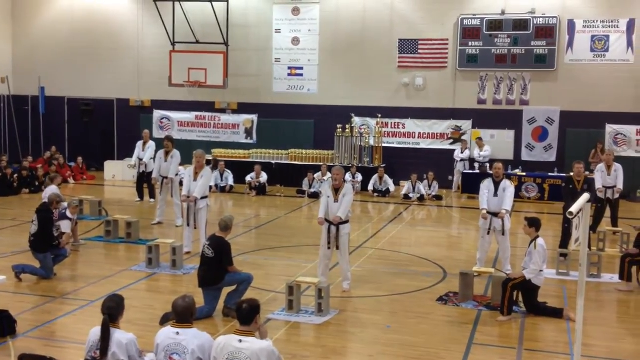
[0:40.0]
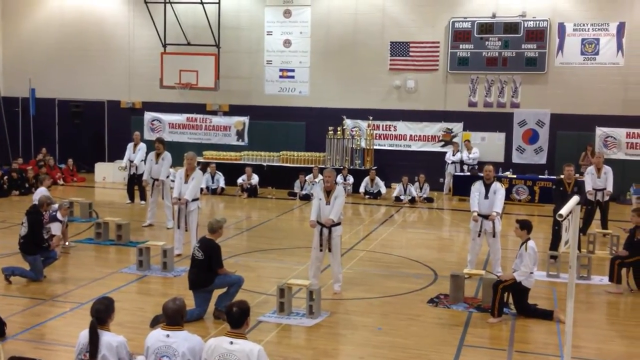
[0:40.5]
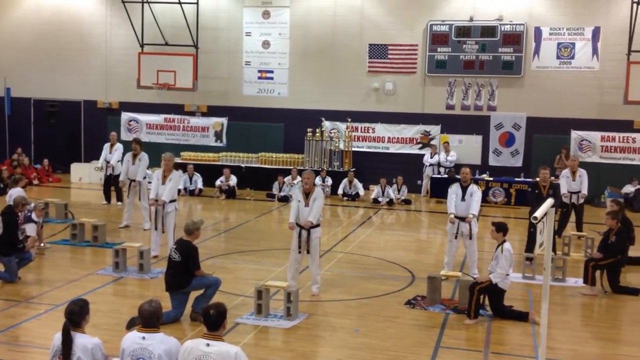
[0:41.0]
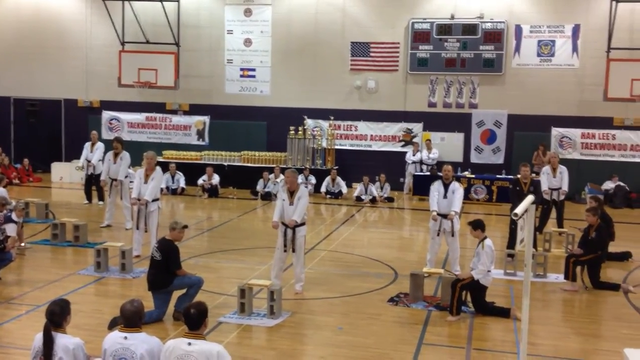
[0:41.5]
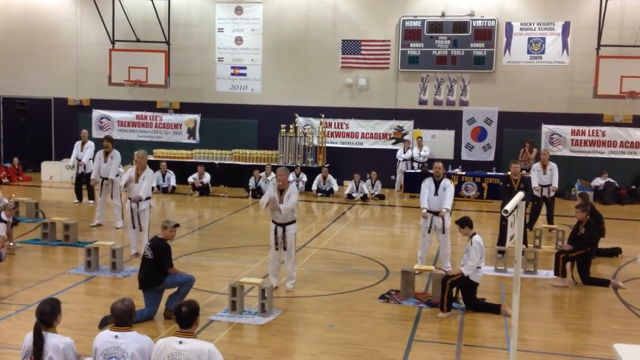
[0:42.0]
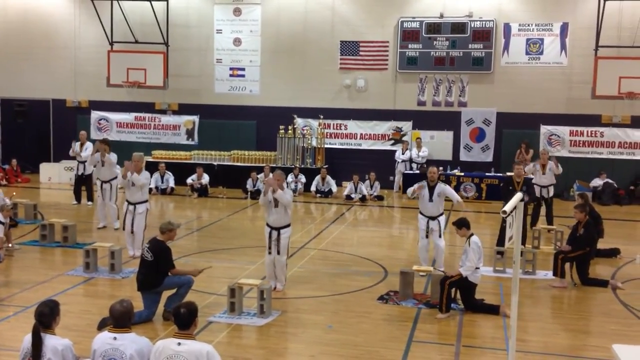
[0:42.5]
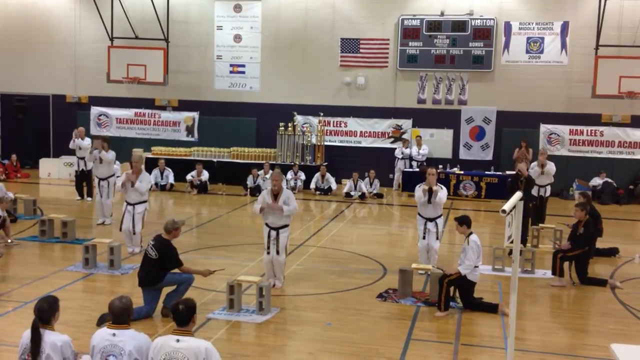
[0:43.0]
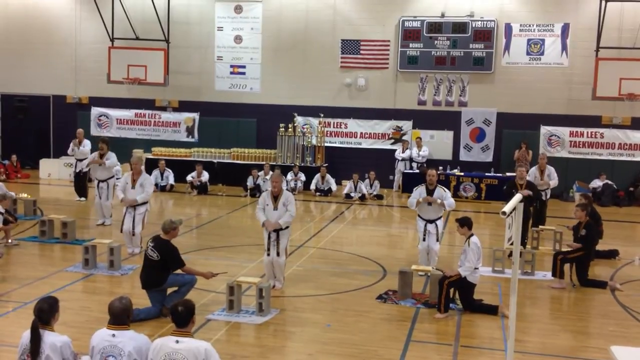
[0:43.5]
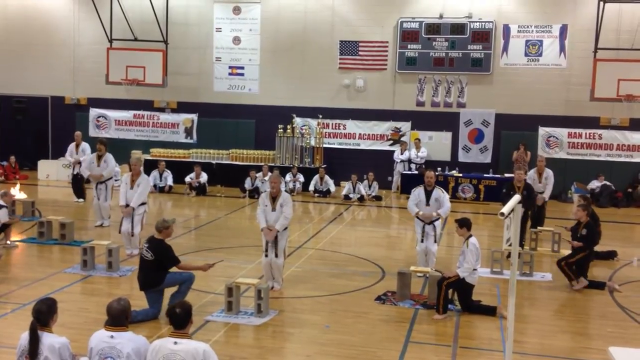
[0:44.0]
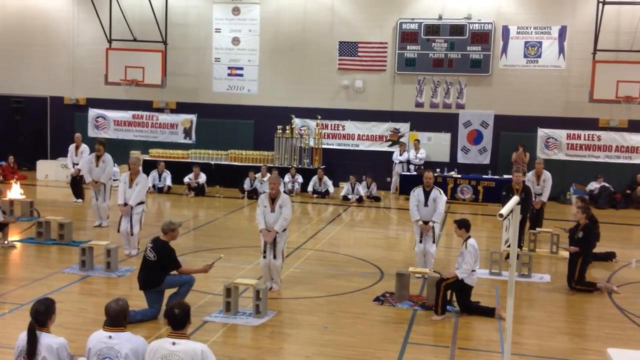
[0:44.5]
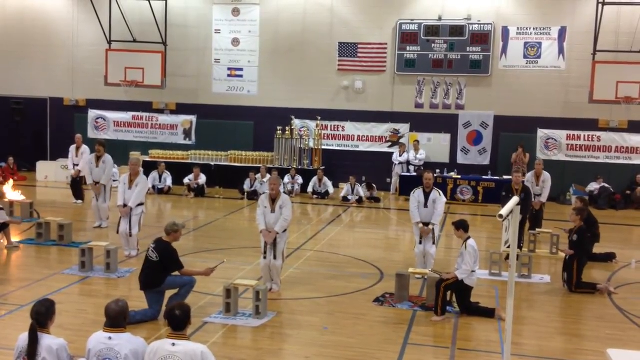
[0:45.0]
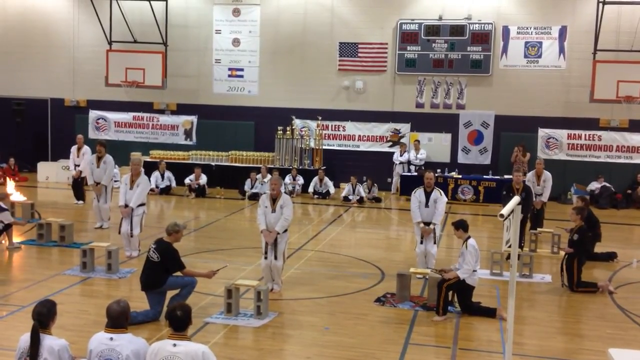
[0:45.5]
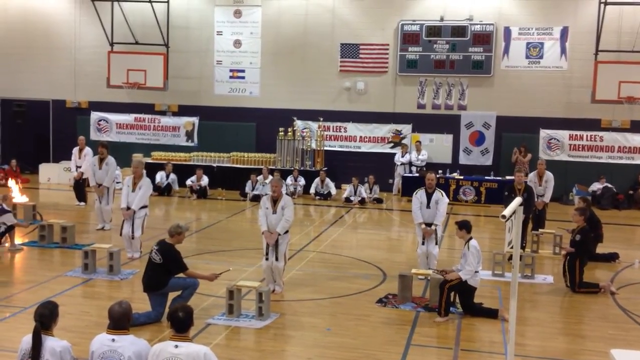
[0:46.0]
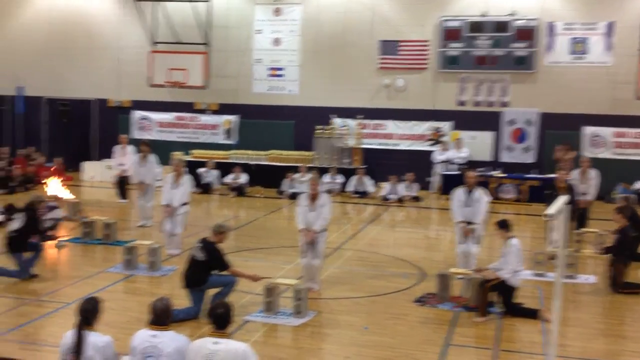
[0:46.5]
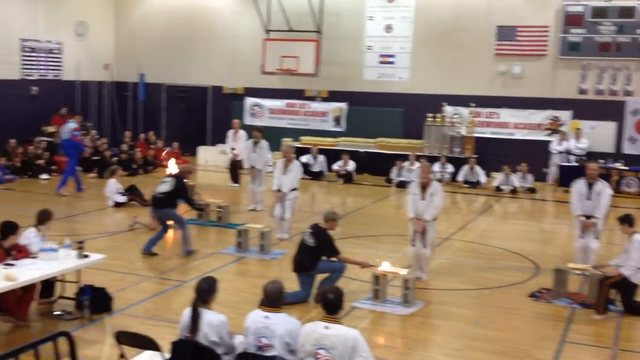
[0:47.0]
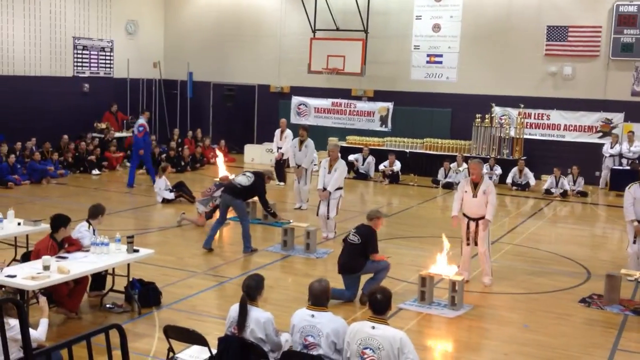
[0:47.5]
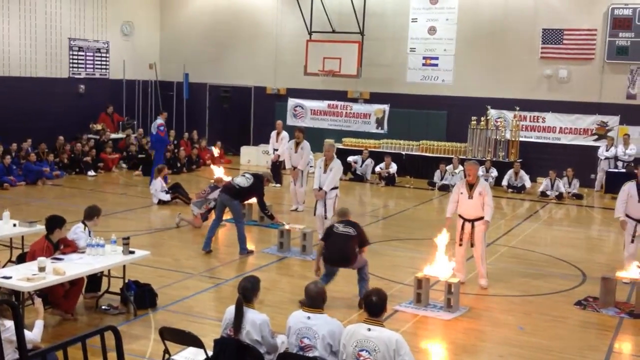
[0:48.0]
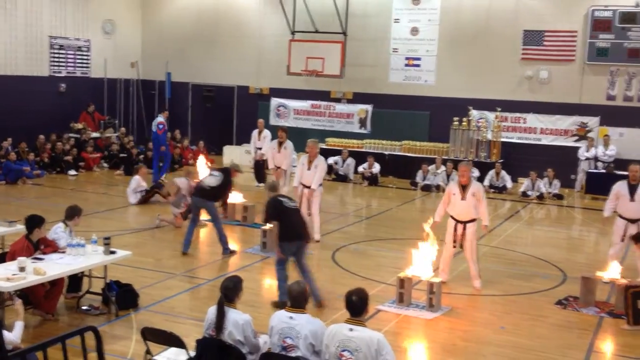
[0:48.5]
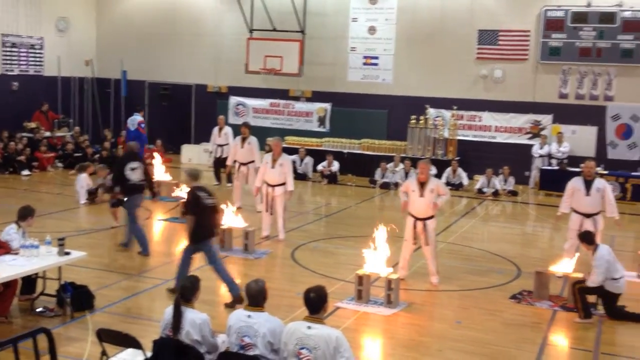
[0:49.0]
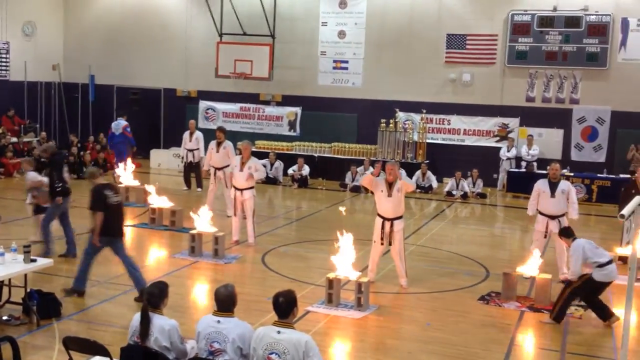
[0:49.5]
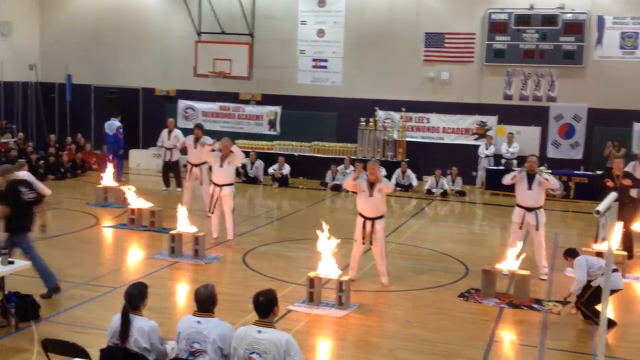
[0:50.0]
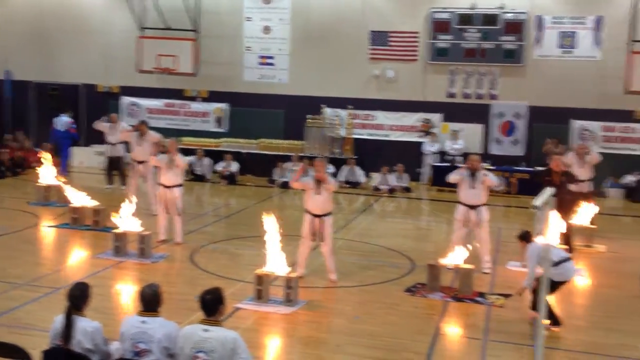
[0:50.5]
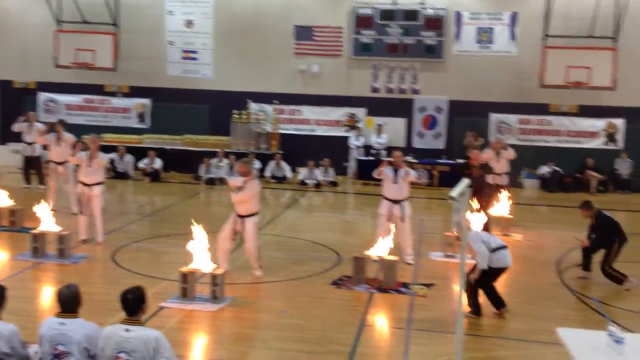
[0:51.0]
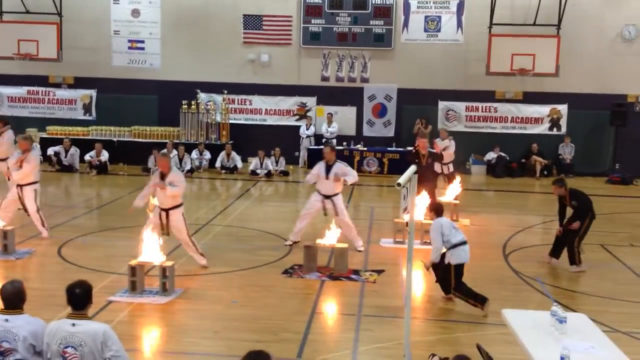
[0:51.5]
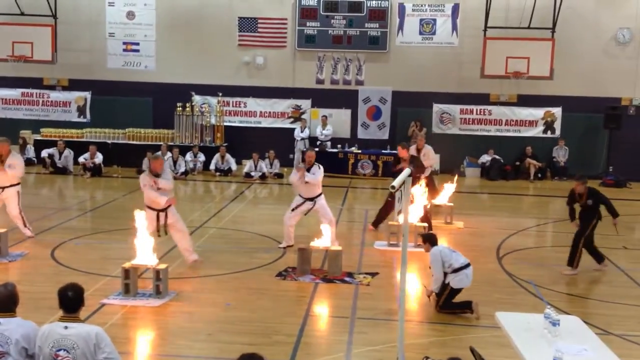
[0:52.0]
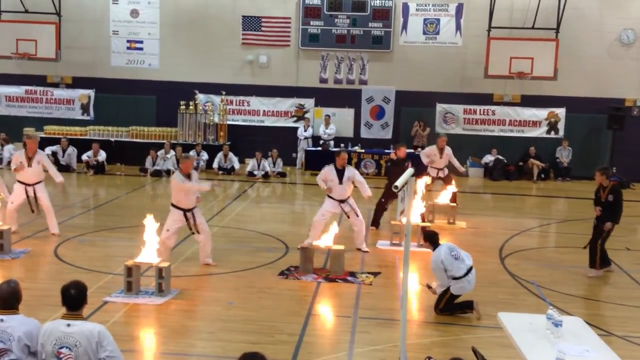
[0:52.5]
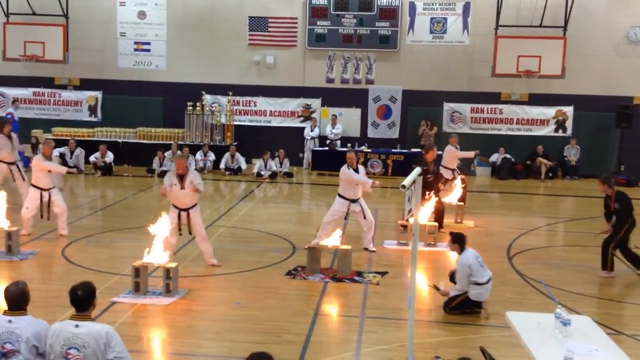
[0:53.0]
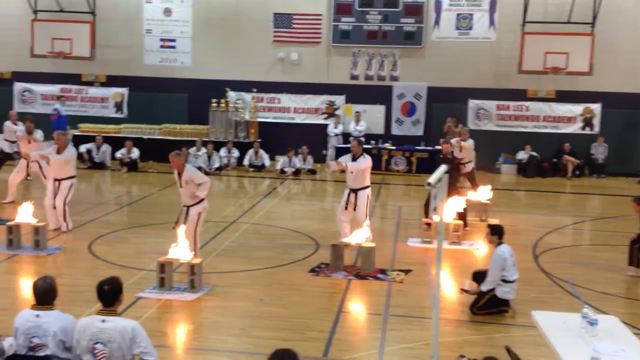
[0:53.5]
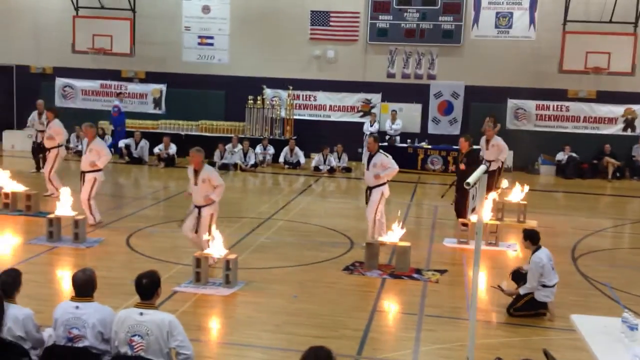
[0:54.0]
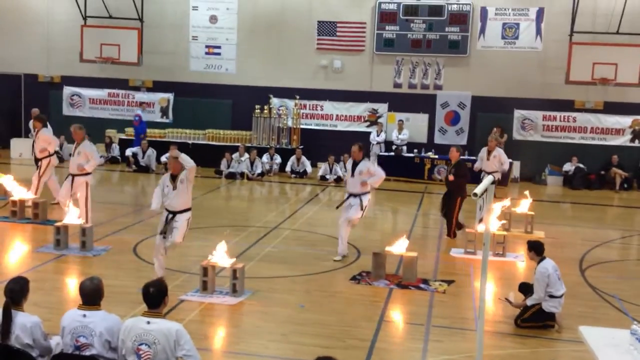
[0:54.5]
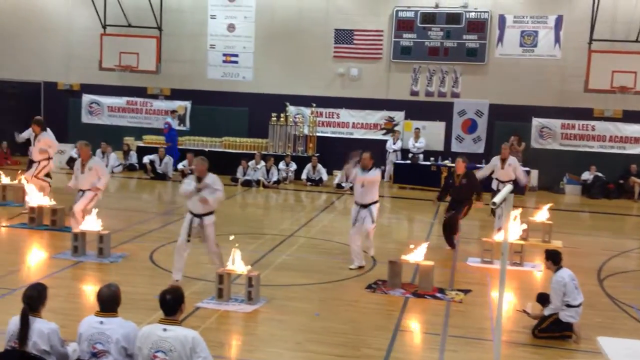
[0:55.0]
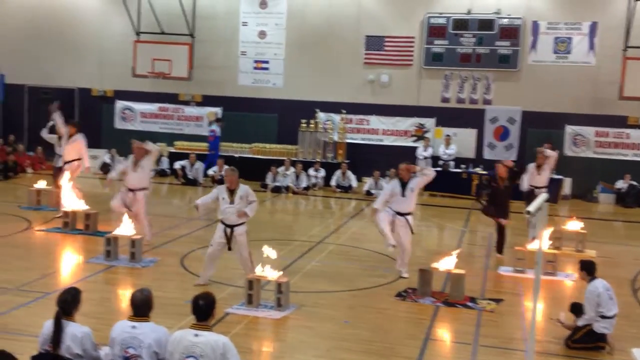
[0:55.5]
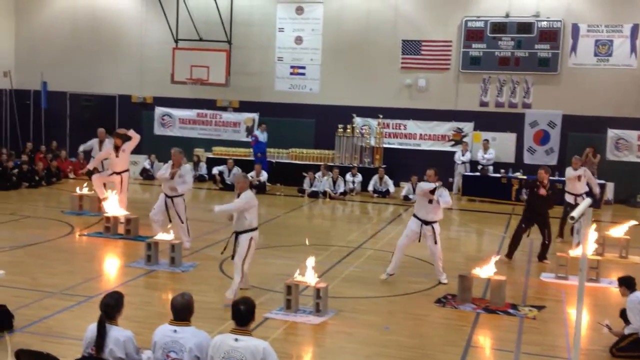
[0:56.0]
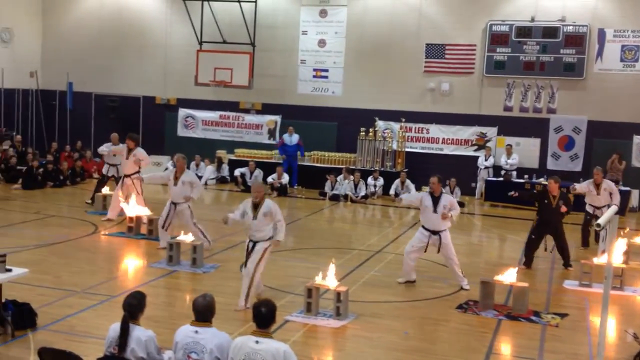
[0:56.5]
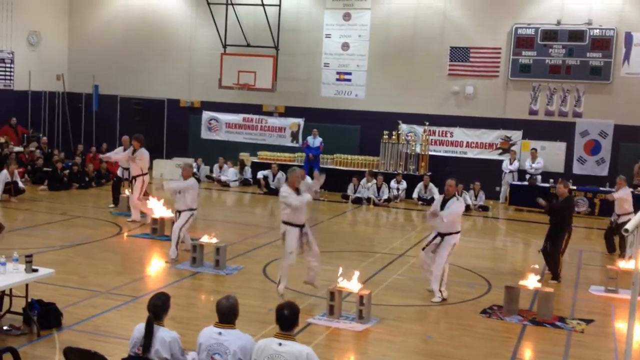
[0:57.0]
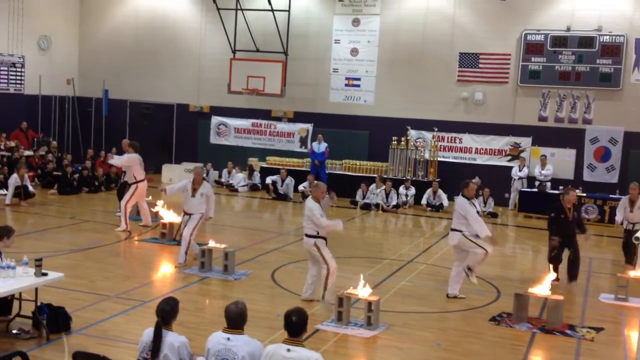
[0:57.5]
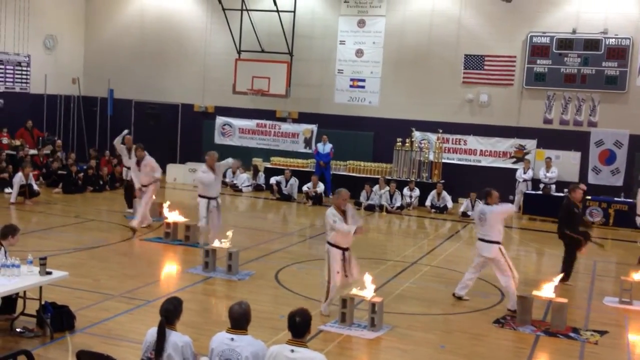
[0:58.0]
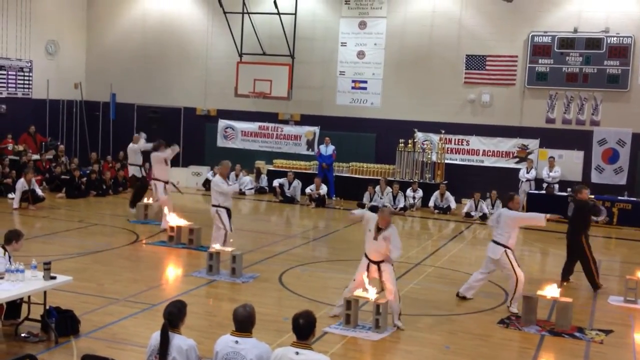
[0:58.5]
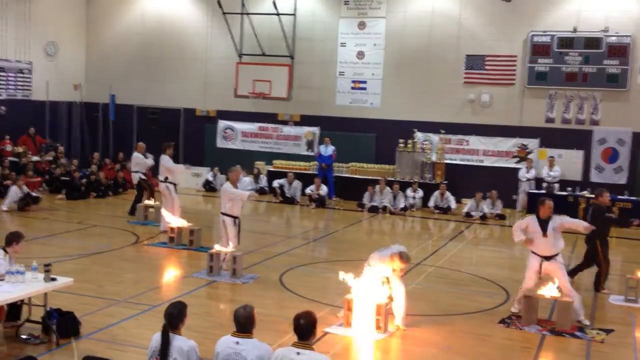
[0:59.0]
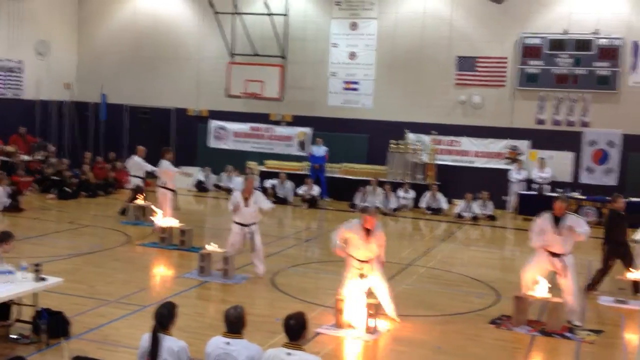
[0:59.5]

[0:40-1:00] The performers finally start moving: they bring their feet together and their hands together down in front of them, then stop in that position. The people kneeling in front of the wooden pieces light them on fire. With all the wood burning, the performers set their feet apart again, raise their hands and begin taekwondo movements, moving side to side, putting their arms out, stepping forward, jumping, crossing their feet and doing punching movements. They turn around, jump again, and then punch down onto the burning wood, each punching right through the fire to break it. The routine around the flames is not completely in sync; the man in front punches first and the rest follow behind him, while everyone watches. The people who lit the fires run.